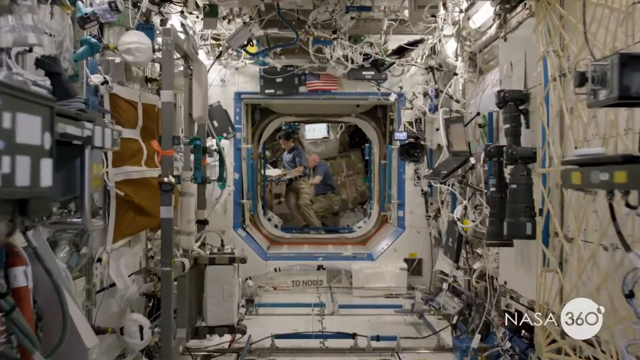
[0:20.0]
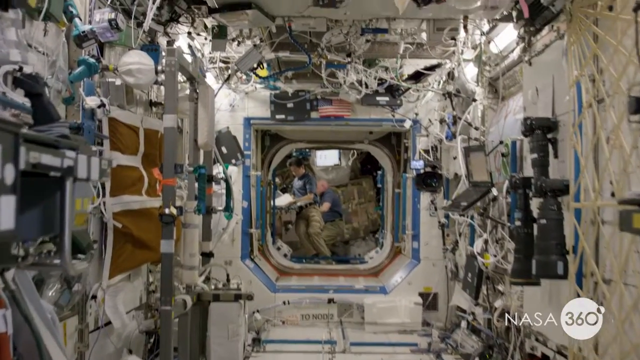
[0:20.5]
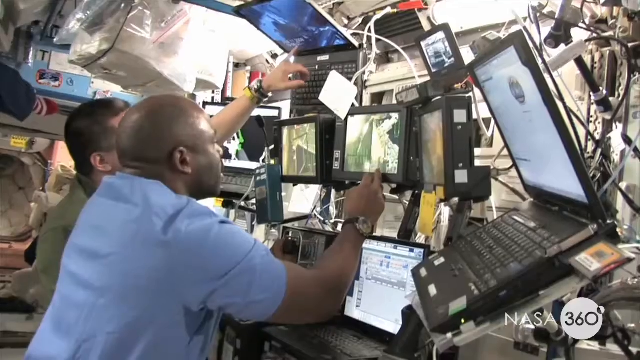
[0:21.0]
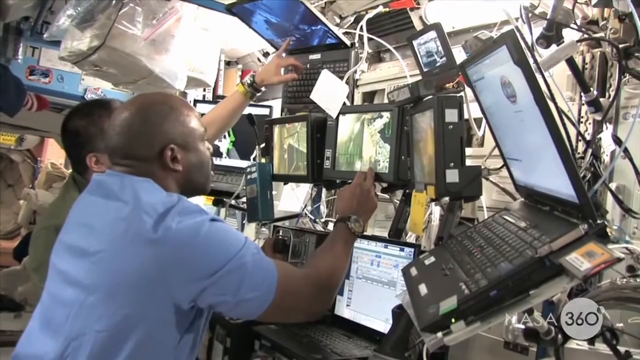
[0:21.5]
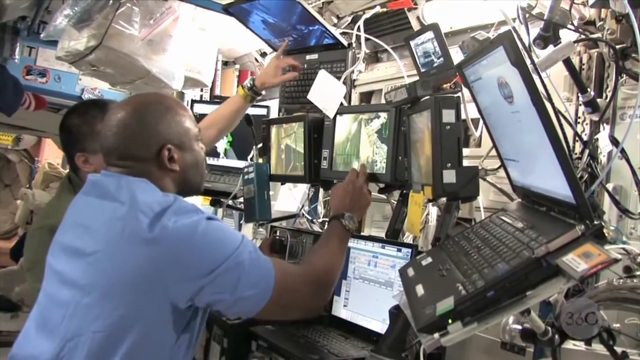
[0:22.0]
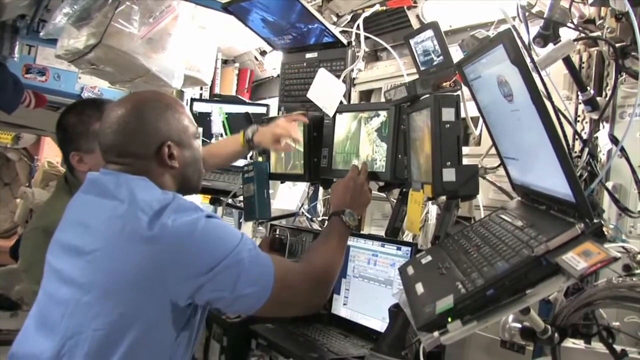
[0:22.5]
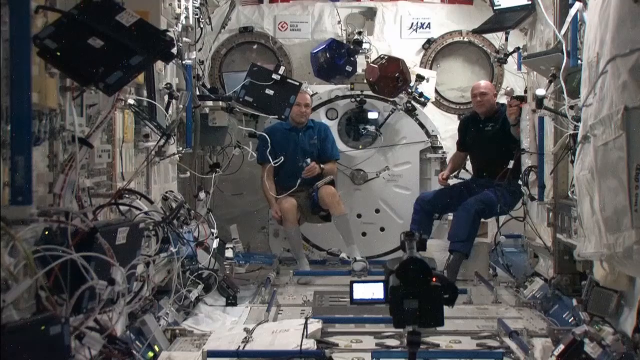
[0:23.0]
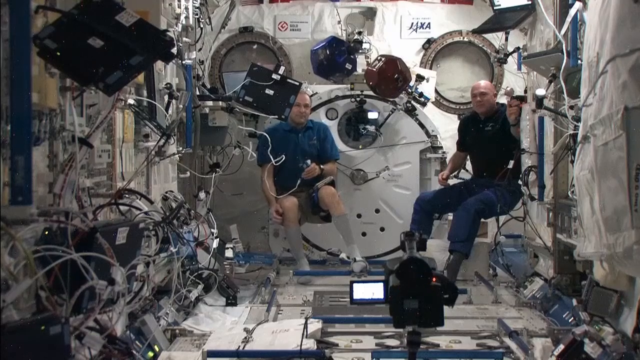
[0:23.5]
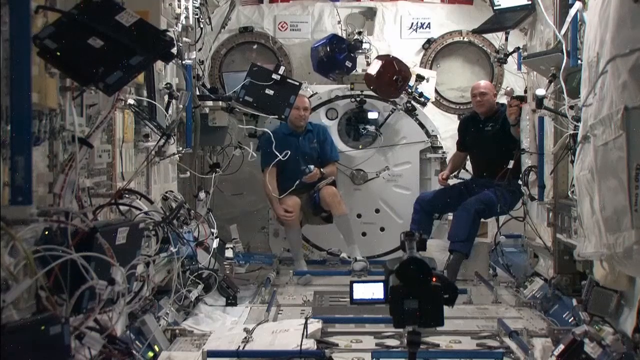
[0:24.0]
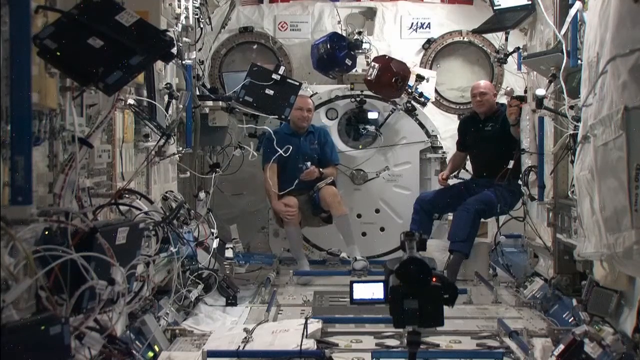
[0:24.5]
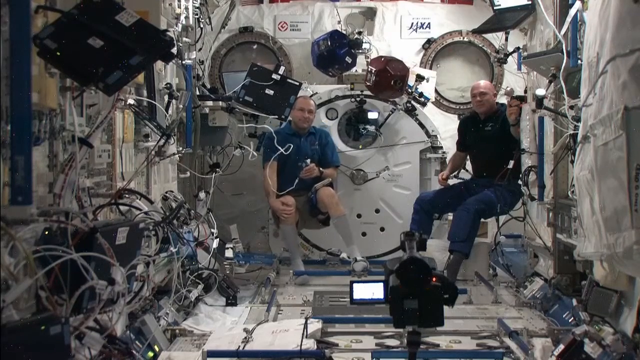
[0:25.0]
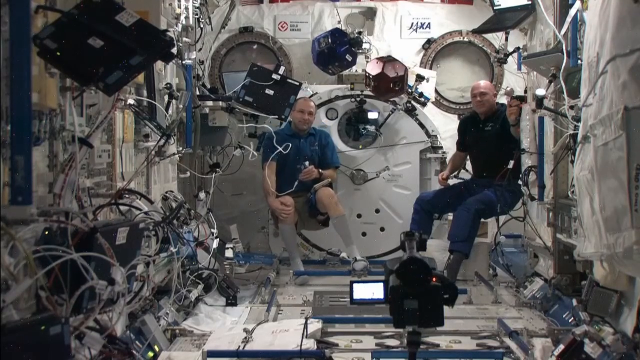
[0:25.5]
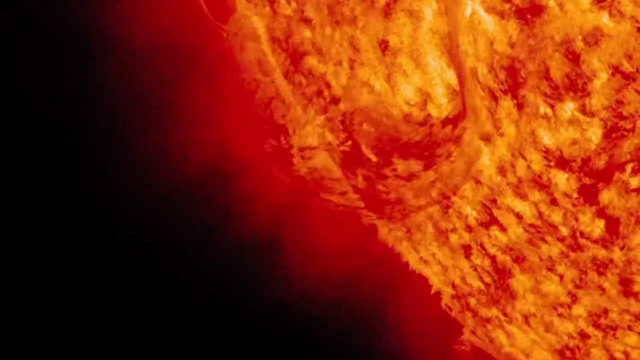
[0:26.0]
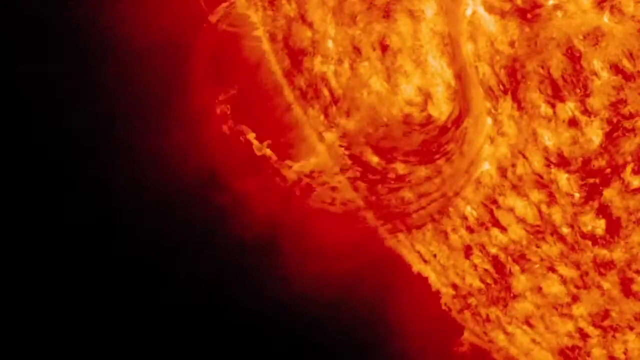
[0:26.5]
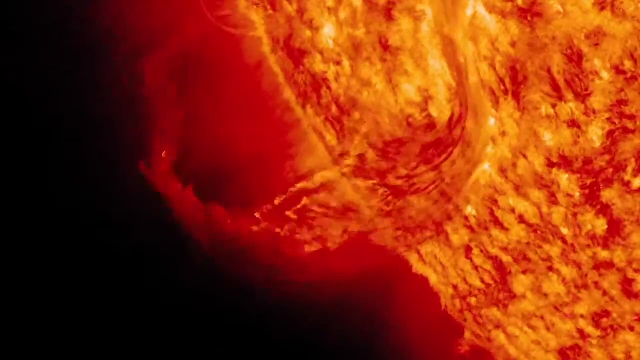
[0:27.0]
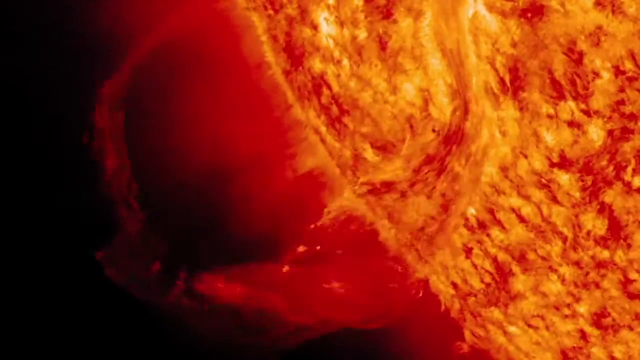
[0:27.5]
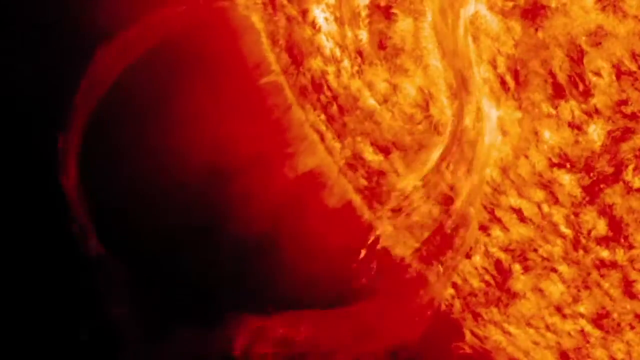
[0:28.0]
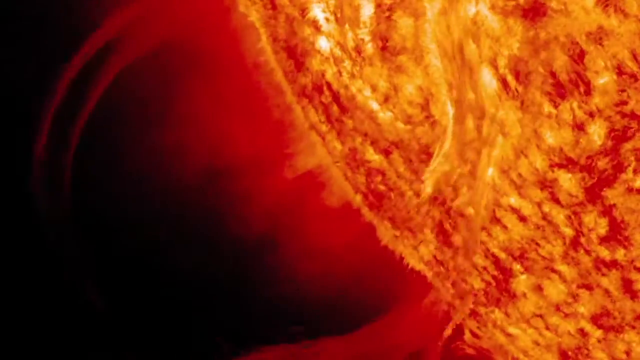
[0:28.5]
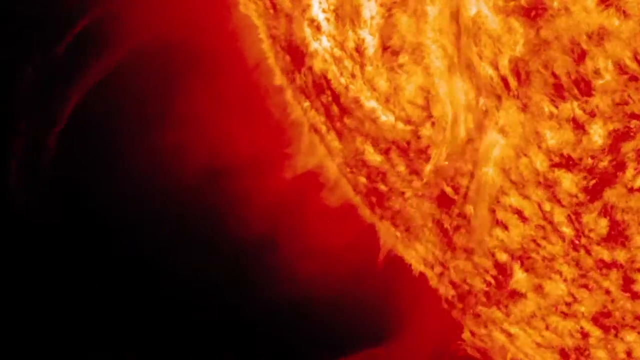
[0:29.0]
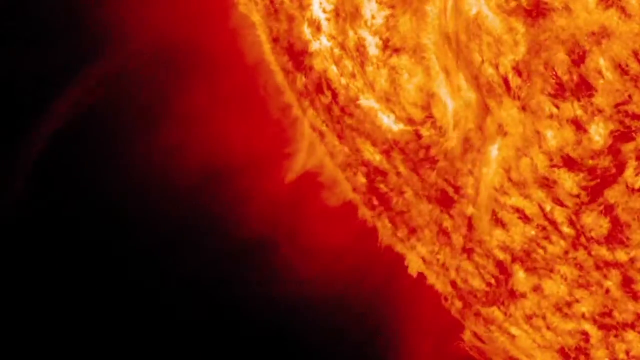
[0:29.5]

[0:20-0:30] Real footage shows actual astronauts at some kind of space station. The camera moves through a tunnel toward astronauts in the distance in a different cabin. It cuts to two different astronauts looking at various monitors in front of them: the one on the left points with the pinky finger of their left hand toward a laptop screen on the roof, and the one on the right points with the index and middle fingers of their right hand toward a monitor directly in front of them. Next, two astronauts float in a room surrounded by various equipment and wires, both with their knees bent, looking forward toward the camera. The video then cuts to a 3D rendering of the sun with a large solar flare coming off it in a spiral, fiery orange mass.